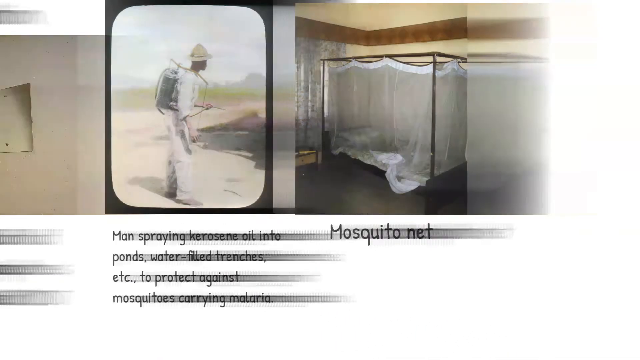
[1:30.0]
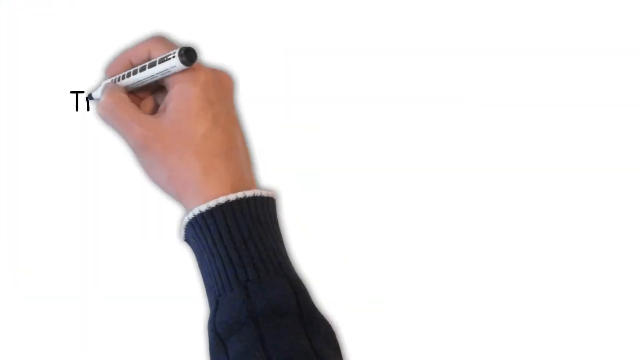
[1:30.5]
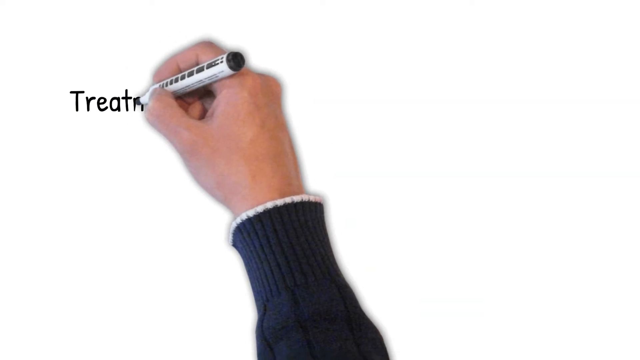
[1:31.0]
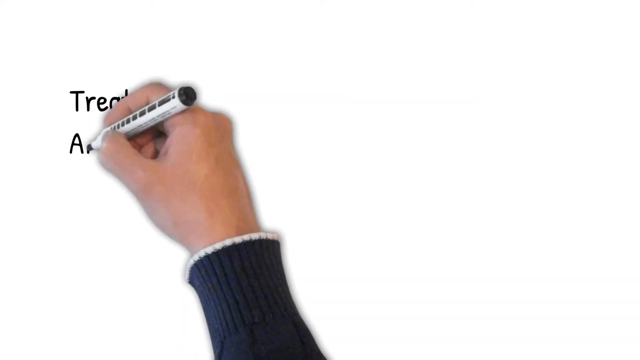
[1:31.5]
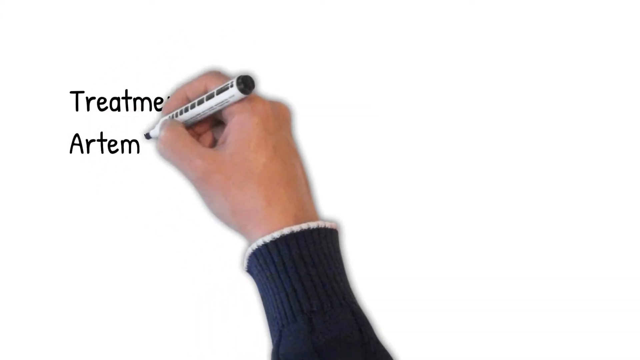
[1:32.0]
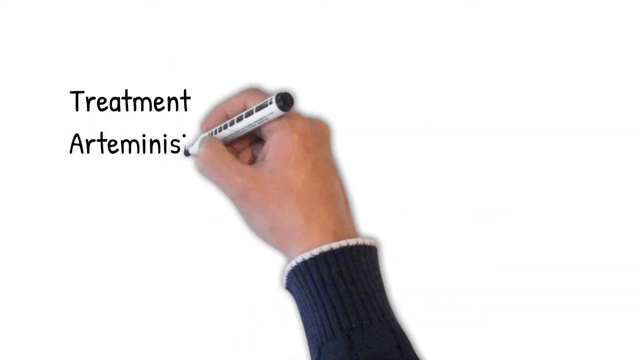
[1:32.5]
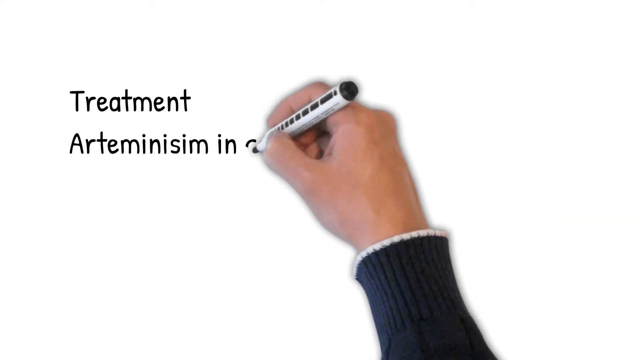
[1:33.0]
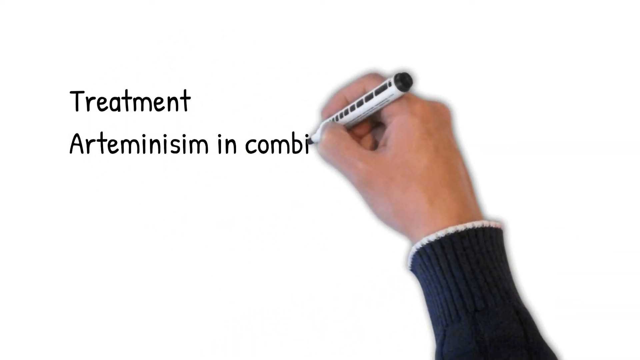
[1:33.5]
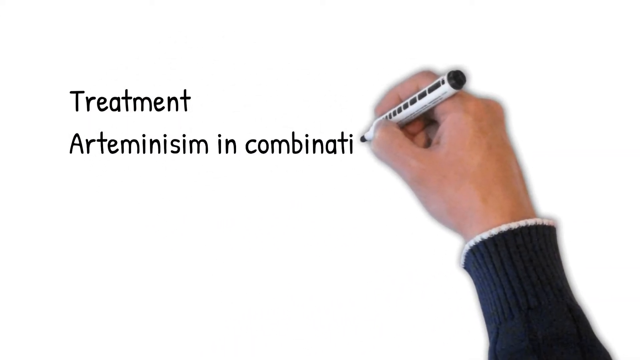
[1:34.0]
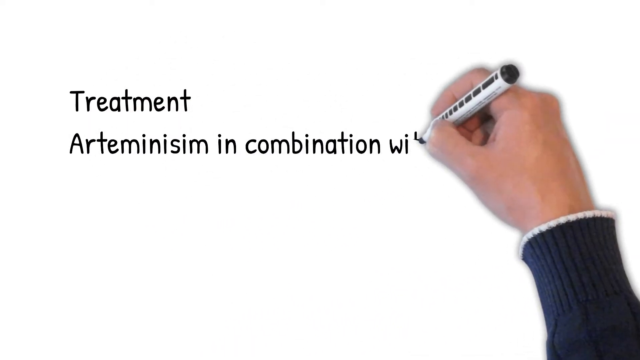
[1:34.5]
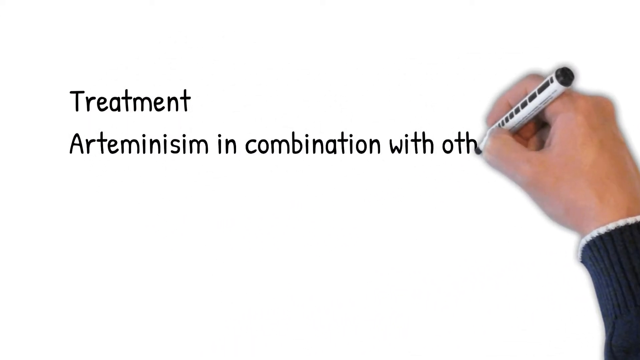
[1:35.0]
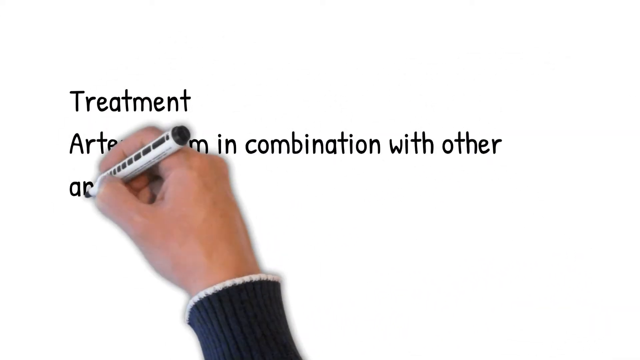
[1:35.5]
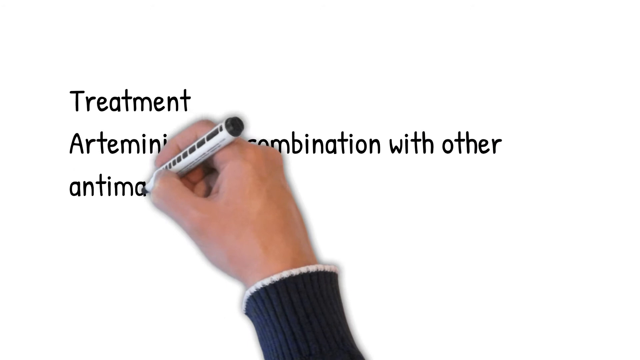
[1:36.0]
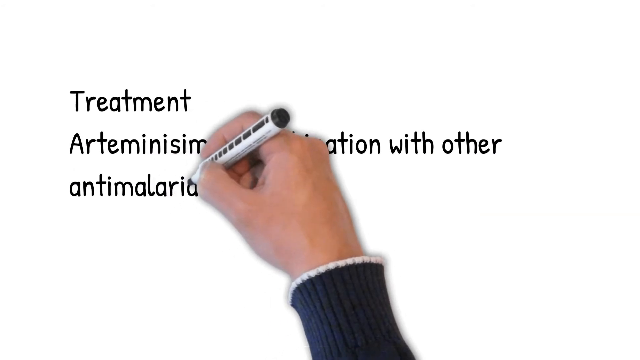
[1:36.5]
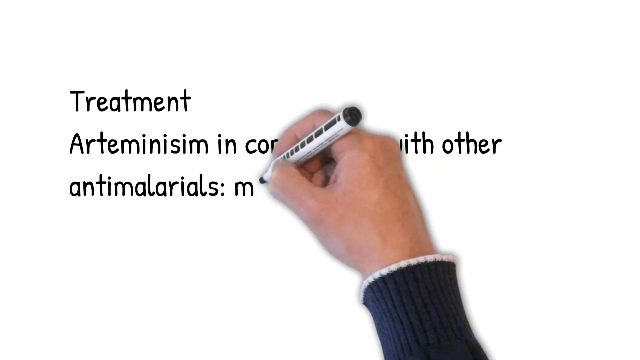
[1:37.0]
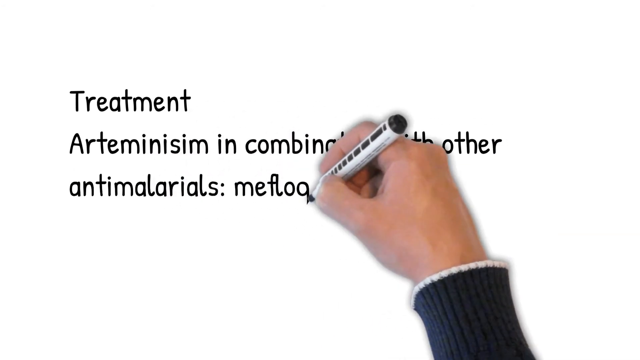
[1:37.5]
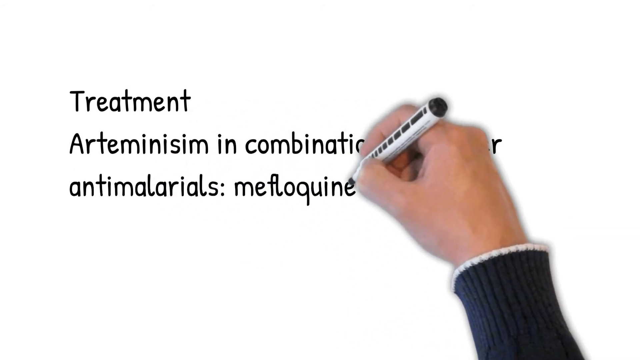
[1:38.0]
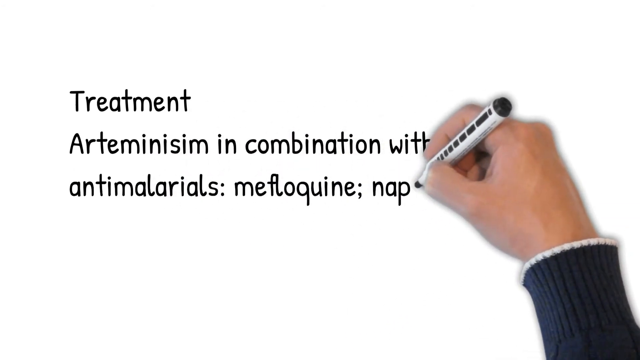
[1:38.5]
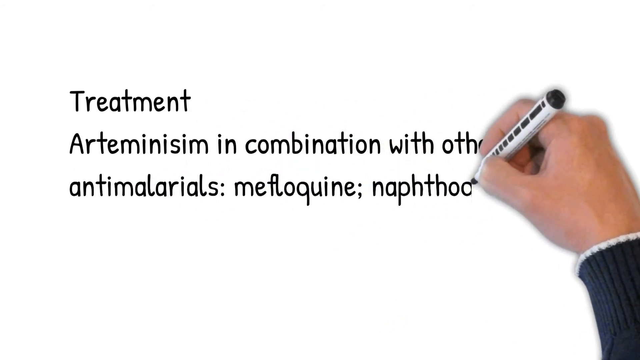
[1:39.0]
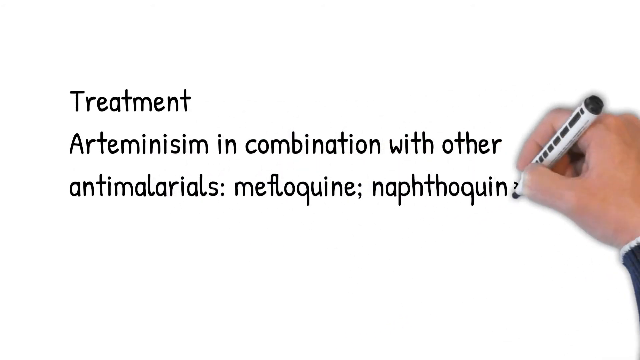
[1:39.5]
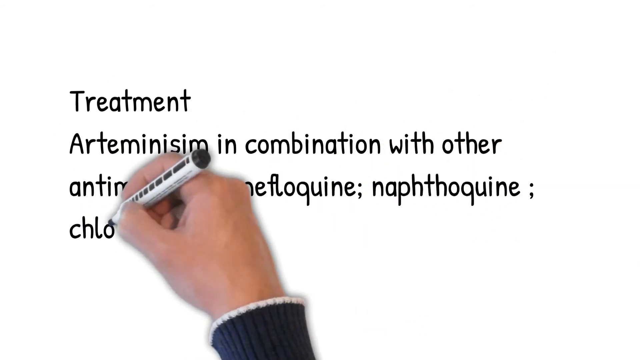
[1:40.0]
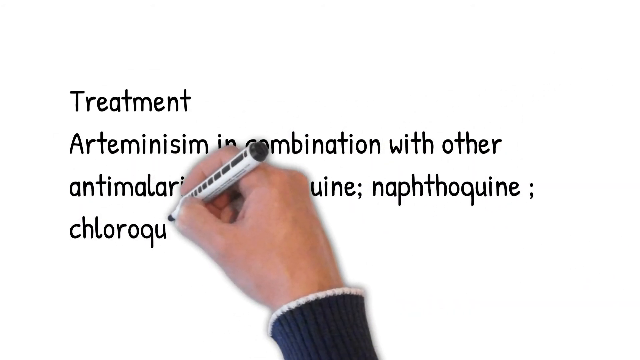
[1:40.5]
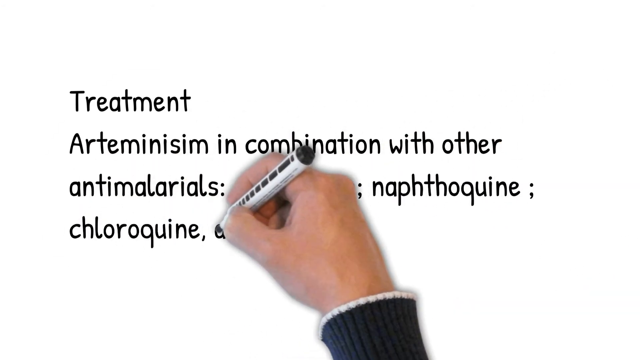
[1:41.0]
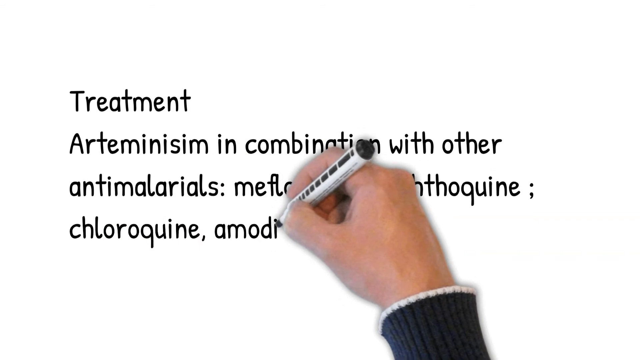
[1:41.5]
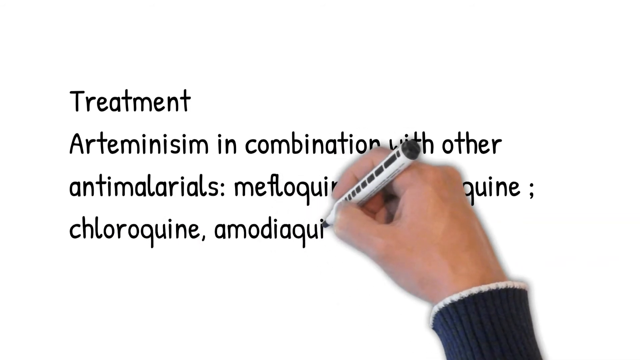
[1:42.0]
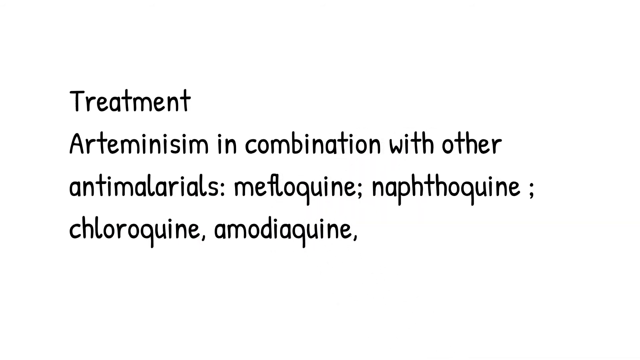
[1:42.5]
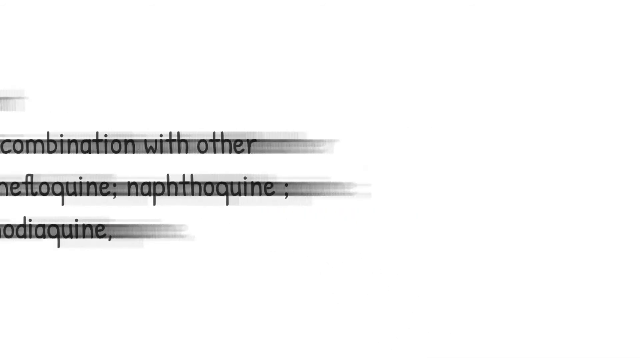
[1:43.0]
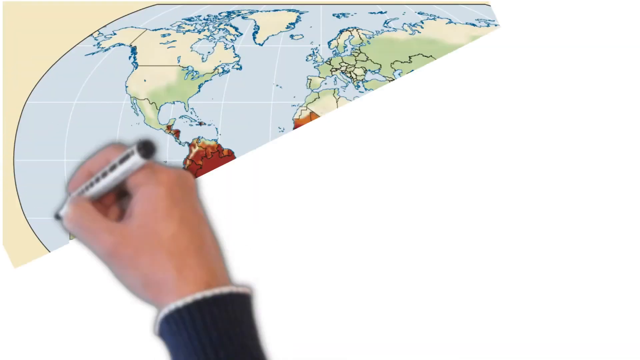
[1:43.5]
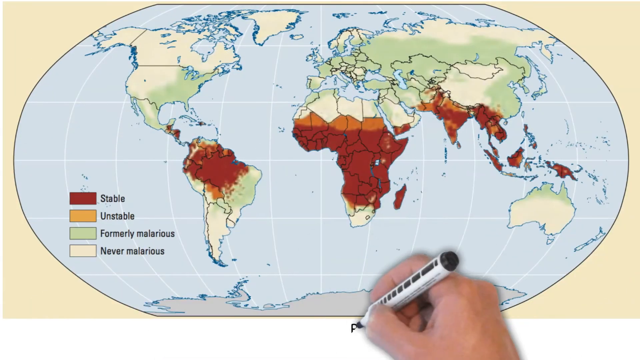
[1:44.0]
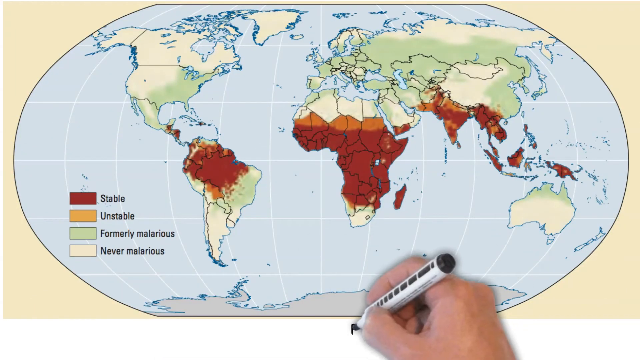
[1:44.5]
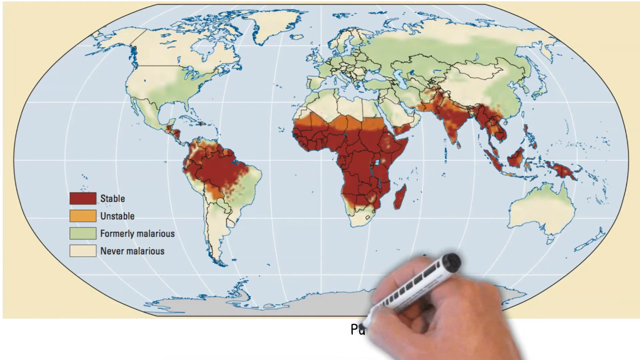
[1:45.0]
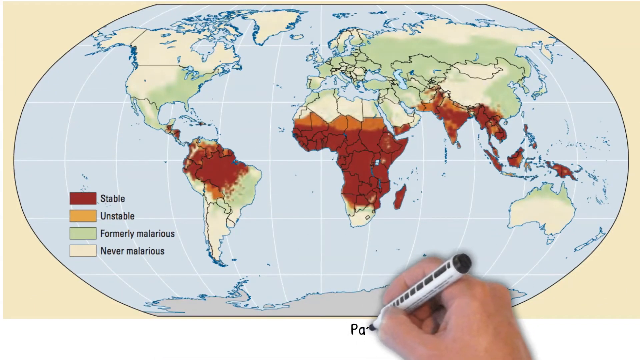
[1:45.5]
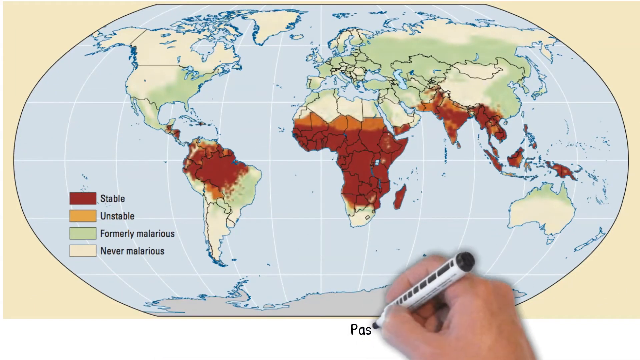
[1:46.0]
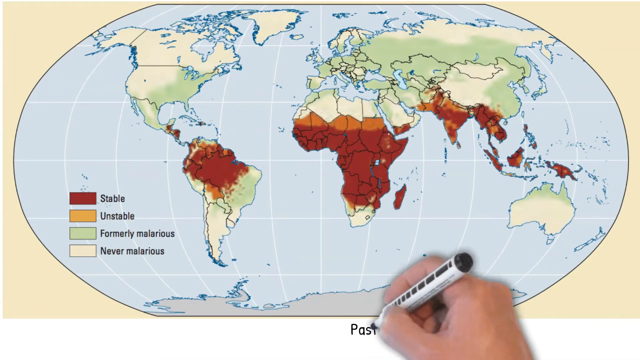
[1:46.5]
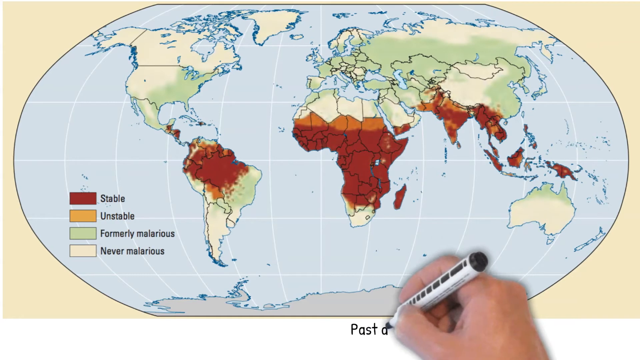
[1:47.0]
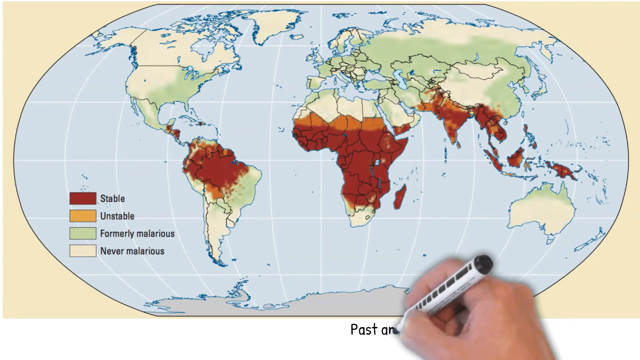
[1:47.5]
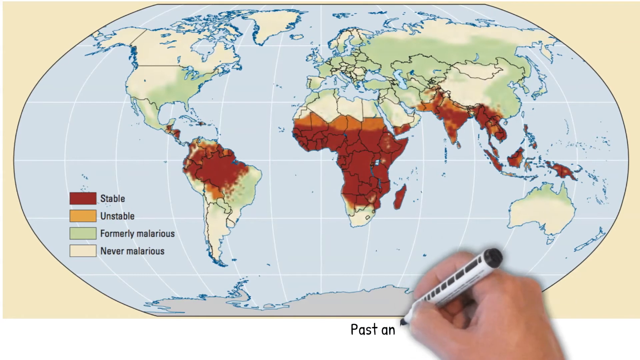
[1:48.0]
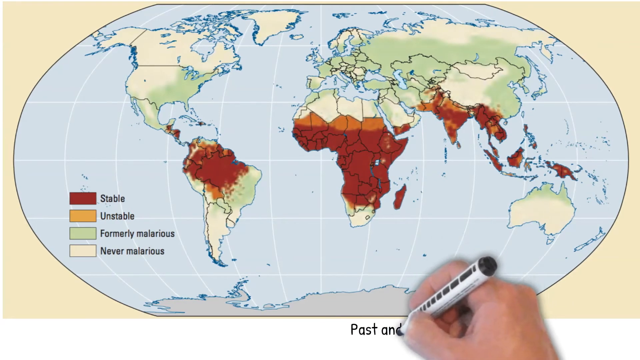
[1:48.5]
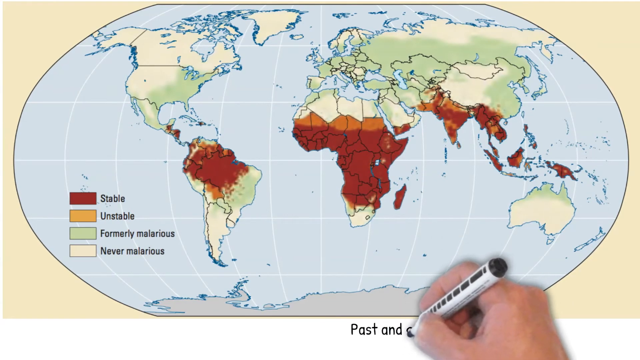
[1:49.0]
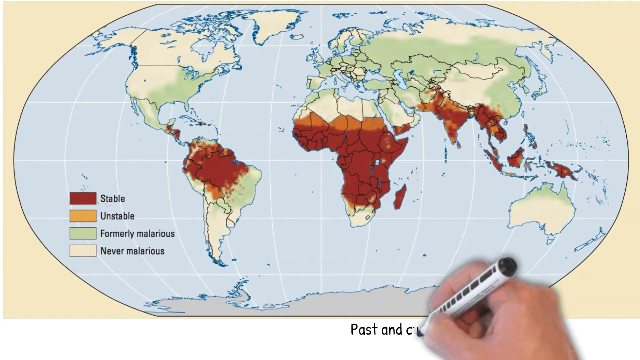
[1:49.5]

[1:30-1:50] The screen has a plain white background, and a hand wearing a long-sleeved jumper is animated to appear as if writing on a whiteboard. The text being written is headed "treatments" and reads "artemism in combination with other antimalarials", followed by a list of drug names including "chloroquine". The screen then changes to a big world map that looks almost like a poster, with a caption underneath beginning "past and". Some of the continents are highlighted in red and orange, and other areas are kind of a yellow or green colour, the normal colours expected on a map. A key on the map reads "red is stable, orange is unstable, green is formerly malarious, and yellow is never malarious".